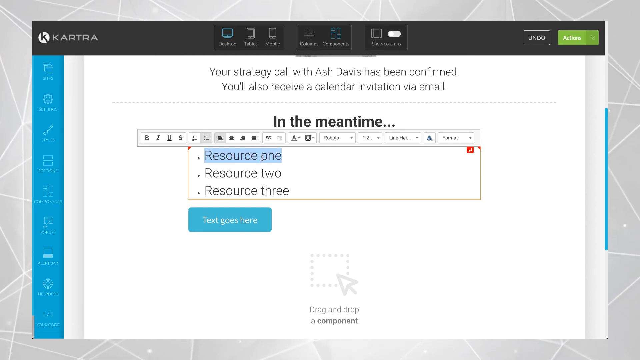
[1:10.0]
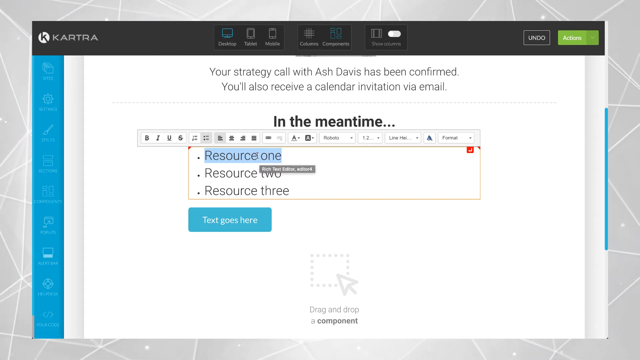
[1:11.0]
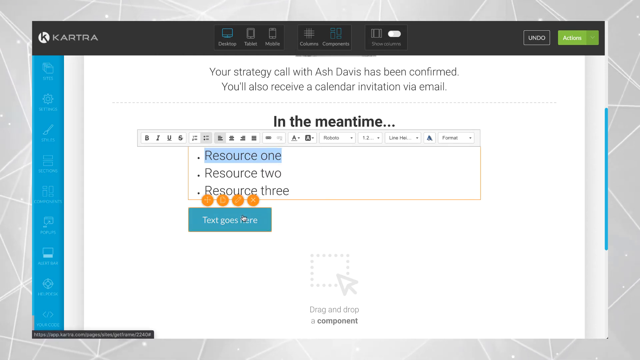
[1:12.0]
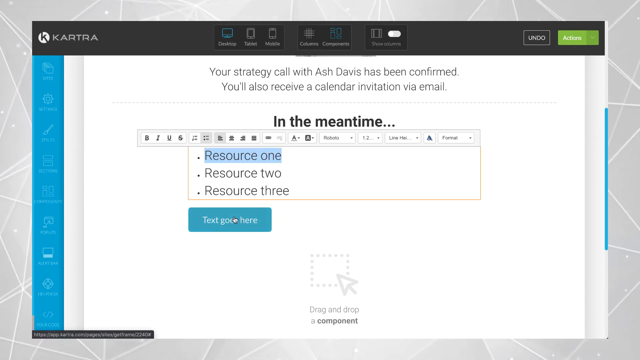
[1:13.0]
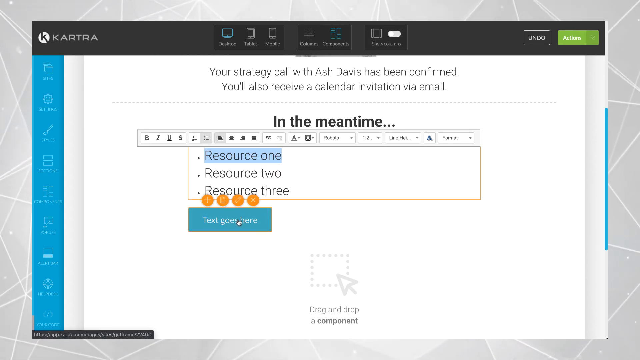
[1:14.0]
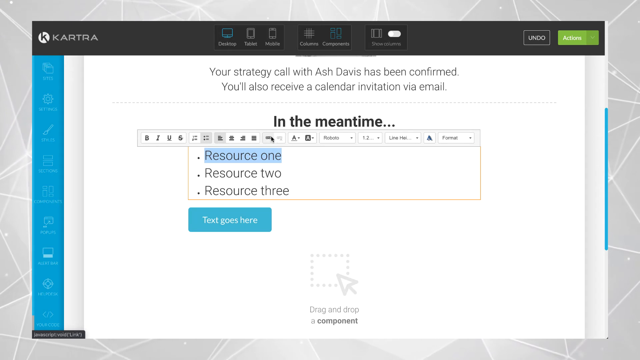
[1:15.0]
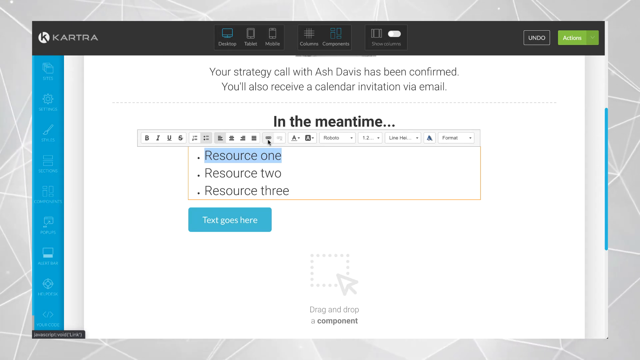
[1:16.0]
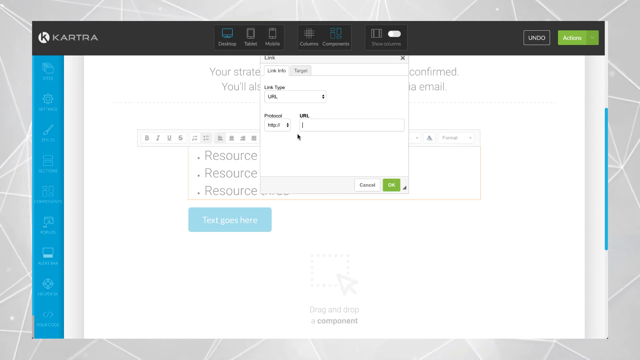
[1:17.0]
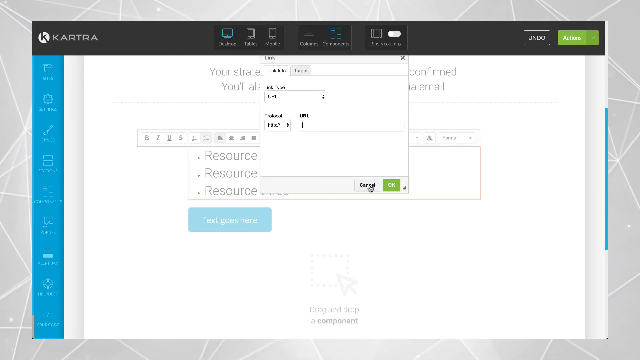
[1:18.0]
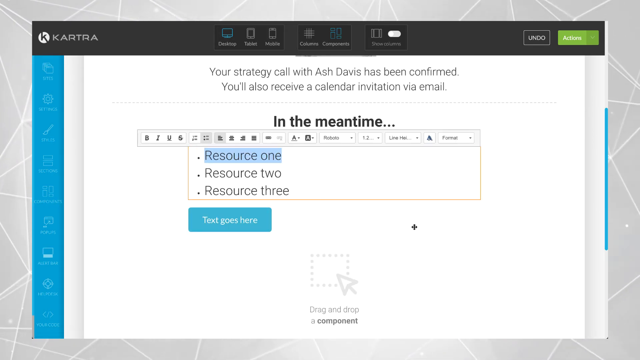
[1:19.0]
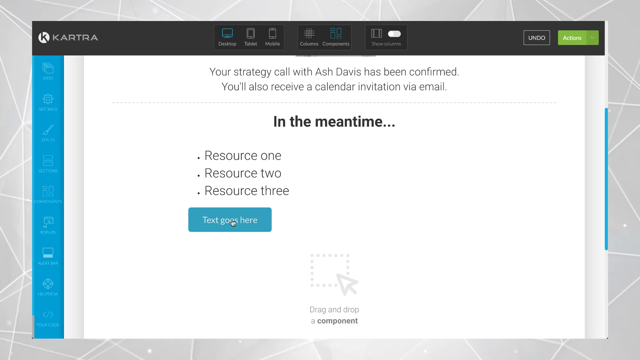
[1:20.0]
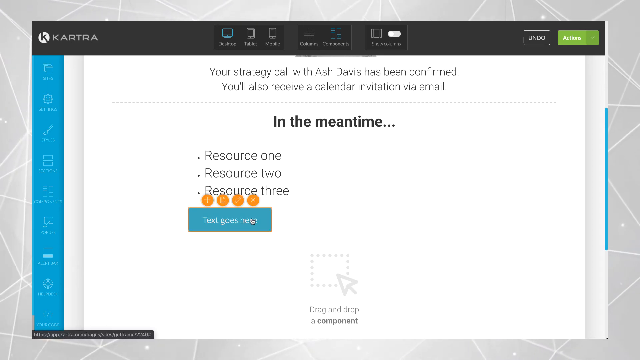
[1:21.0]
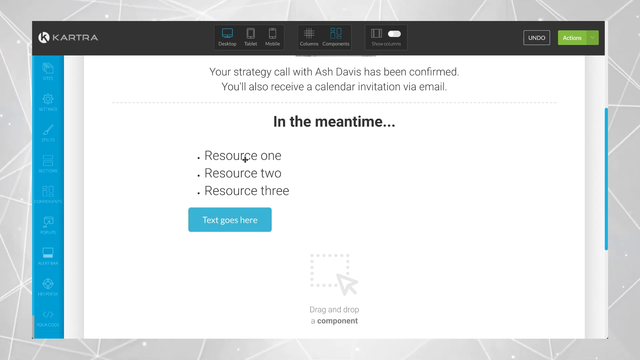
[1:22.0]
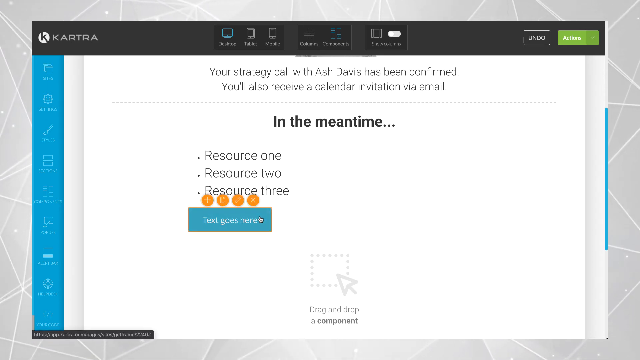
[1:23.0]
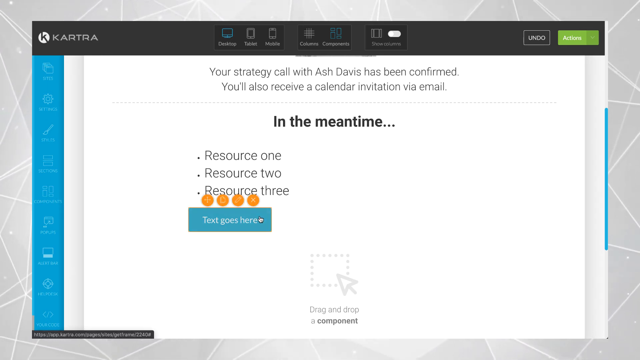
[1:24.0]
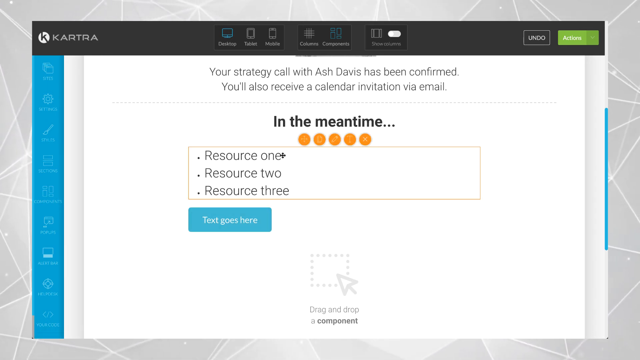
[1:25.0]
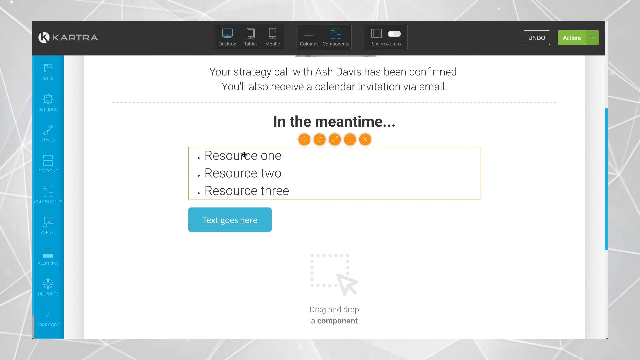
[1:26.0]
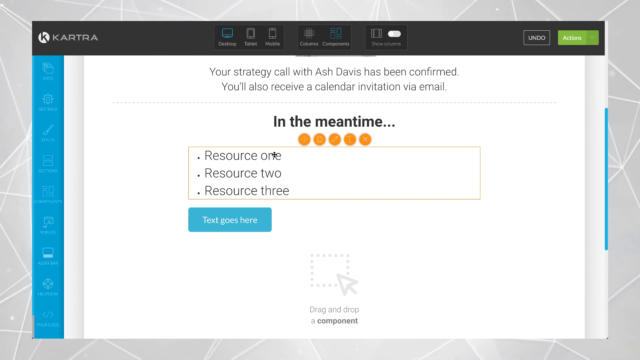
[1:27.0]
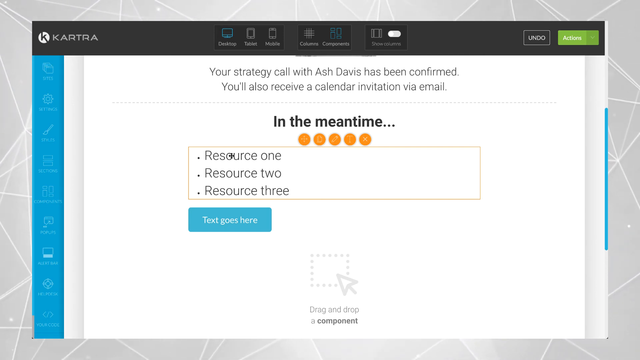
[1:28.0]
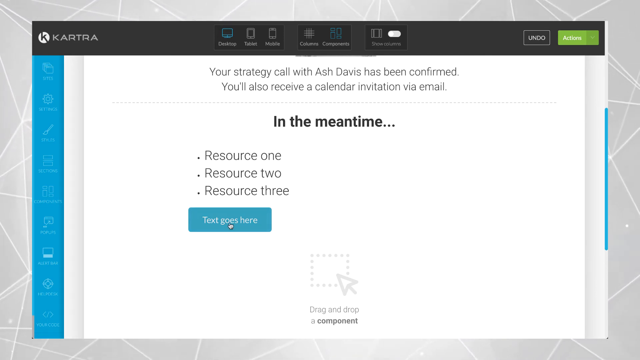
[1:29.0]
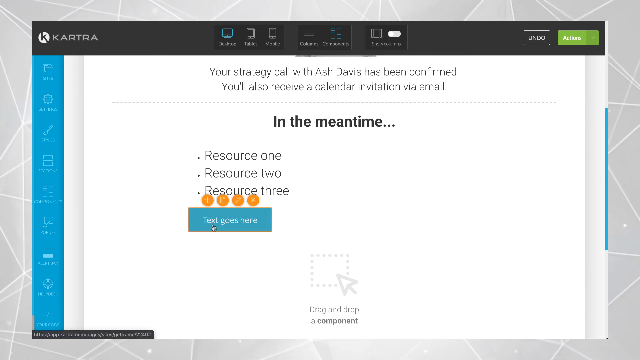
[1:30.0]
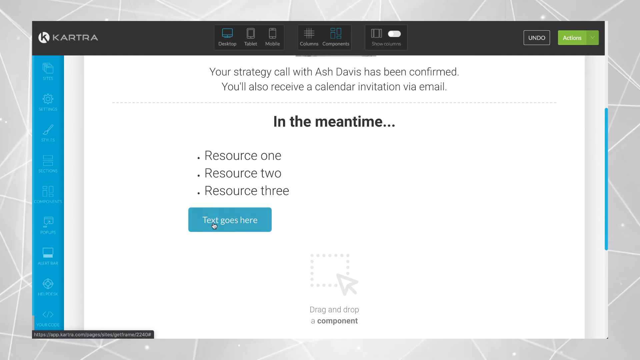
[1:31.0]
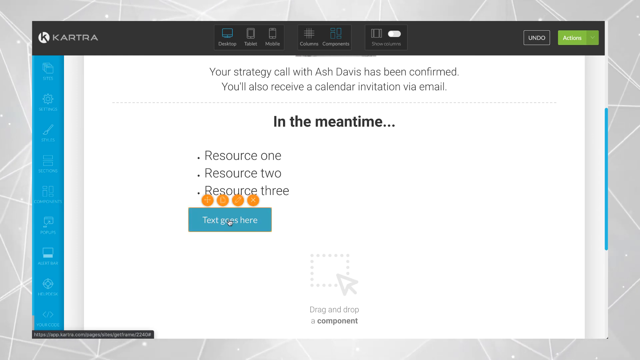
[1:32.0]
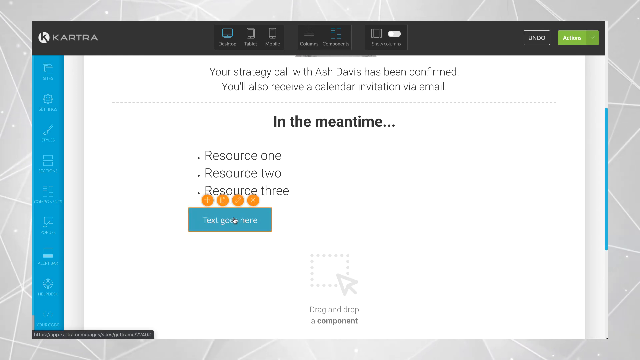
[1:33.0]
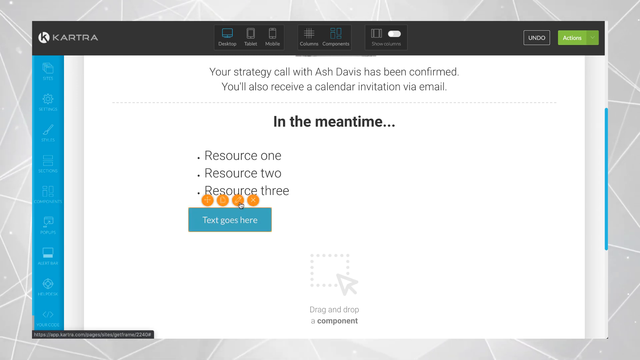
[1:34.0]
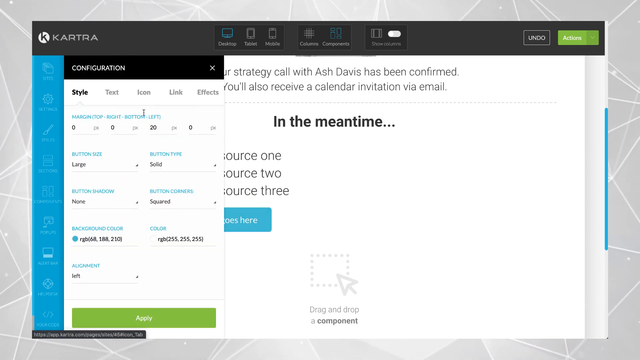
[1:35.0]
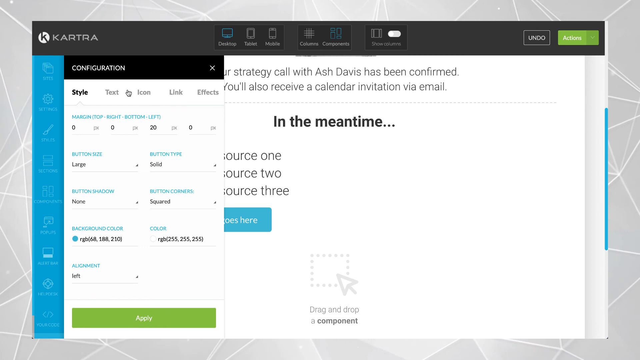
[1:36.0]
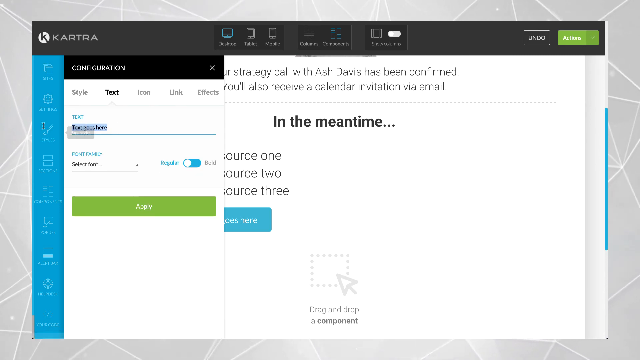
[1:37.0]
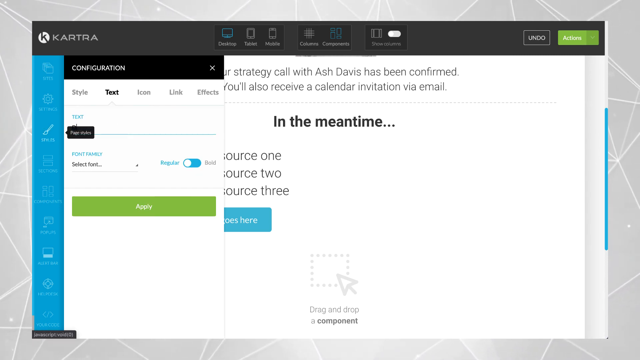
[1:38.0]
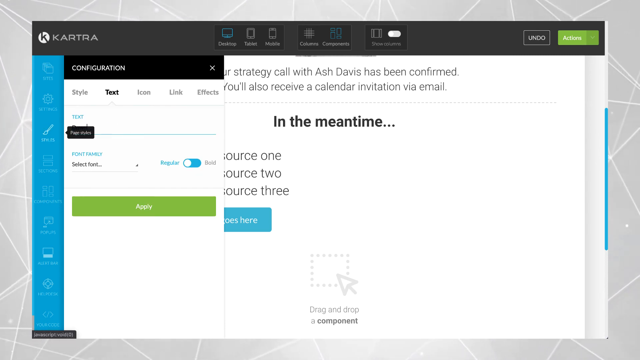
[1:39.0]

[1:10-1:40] The web page says "your strategy call with Ash Davis has been confirmed" and "you'll also receive a calendar invitation via email," then "in the meantime" in bold. Below, resource one is highlighted, with resource two and resource three as the other options. The mouse cursor kind of moves between them and the different options. A pop-up screen appears and is canceled, then "text goes here" is highlighted, the cursor goes back up to resource one, and finally back to "text goes here." An edit option is clicked, bringing up a configuration menu with a new set of options and a green button at the bottom to apply them. The cursor clicks on what appears to be text and begins to highlight and type text.